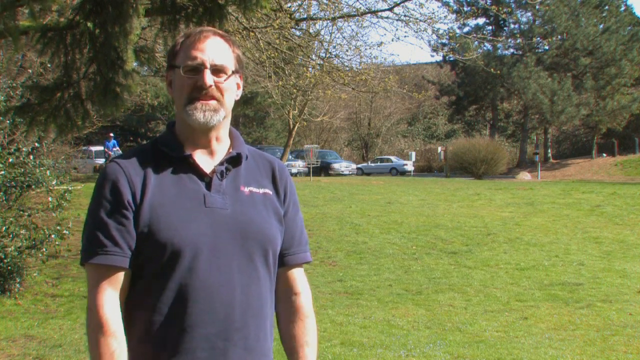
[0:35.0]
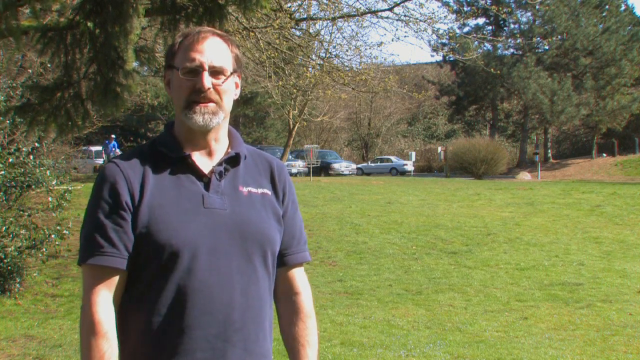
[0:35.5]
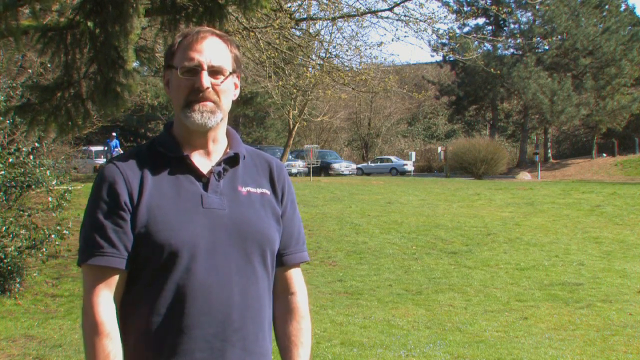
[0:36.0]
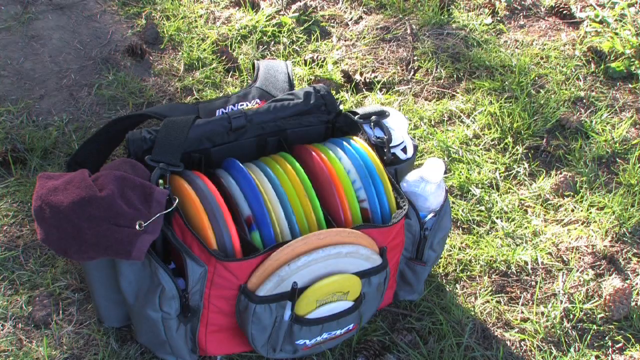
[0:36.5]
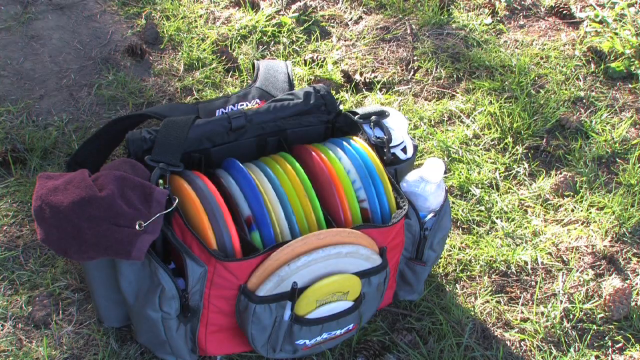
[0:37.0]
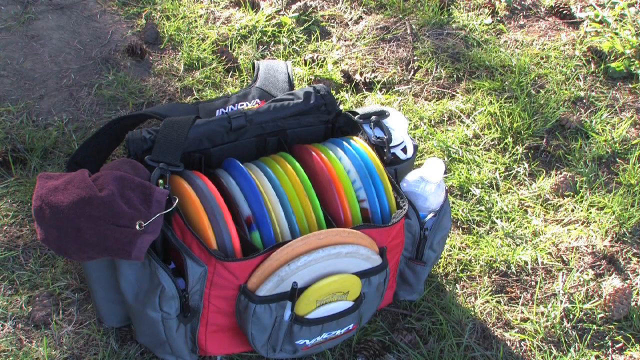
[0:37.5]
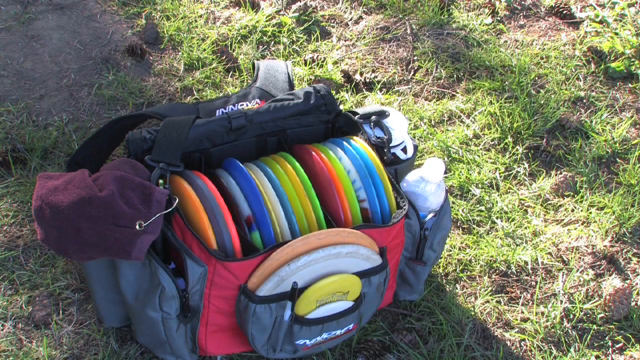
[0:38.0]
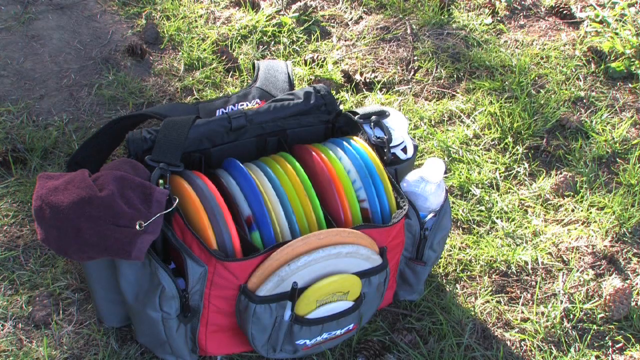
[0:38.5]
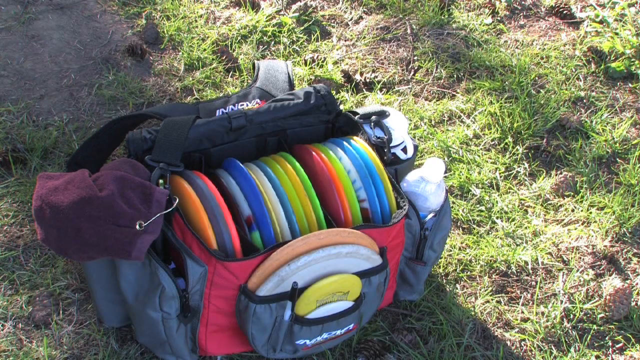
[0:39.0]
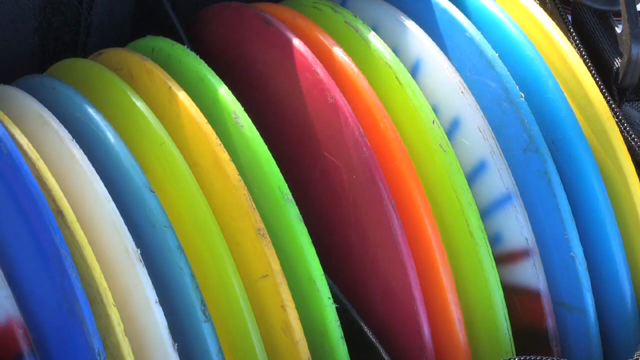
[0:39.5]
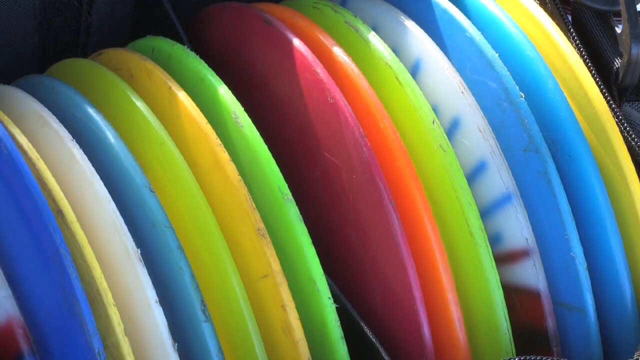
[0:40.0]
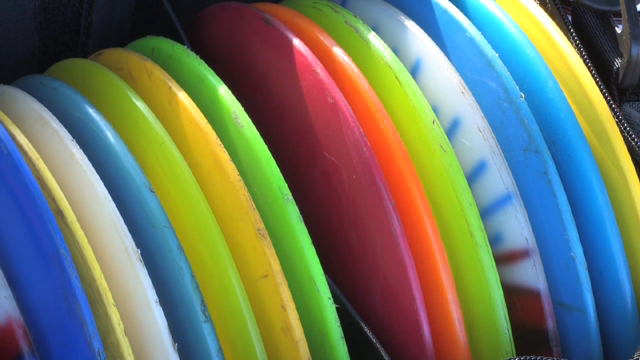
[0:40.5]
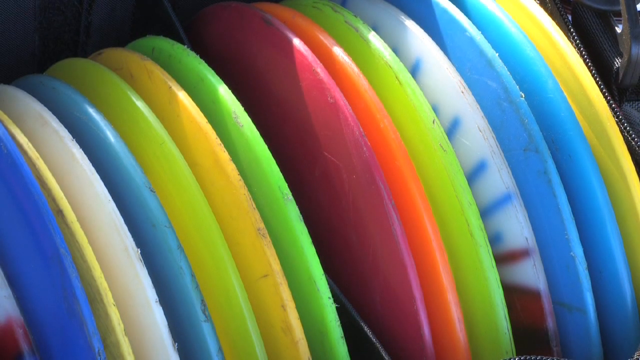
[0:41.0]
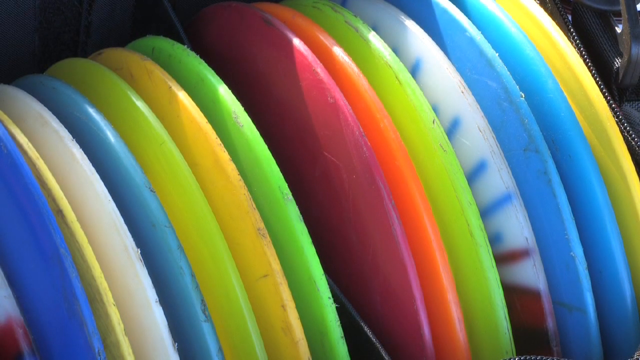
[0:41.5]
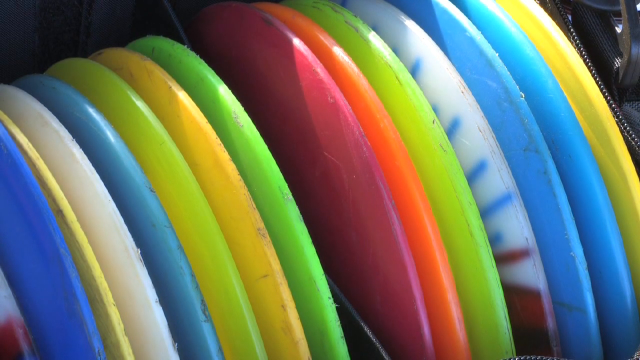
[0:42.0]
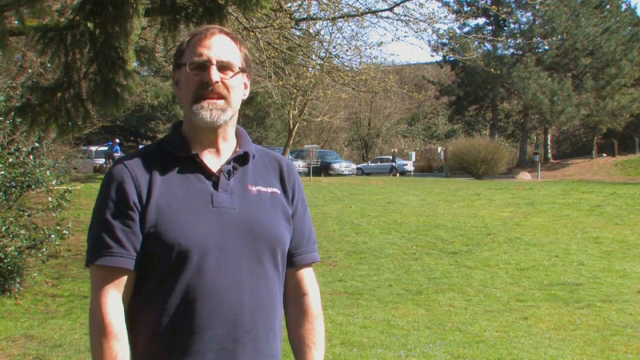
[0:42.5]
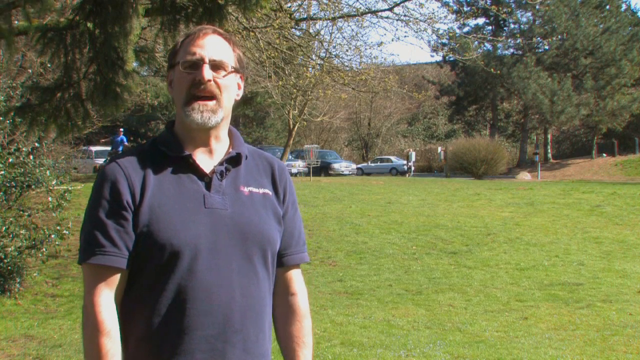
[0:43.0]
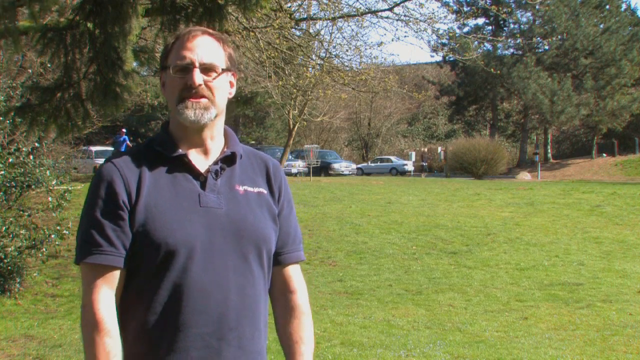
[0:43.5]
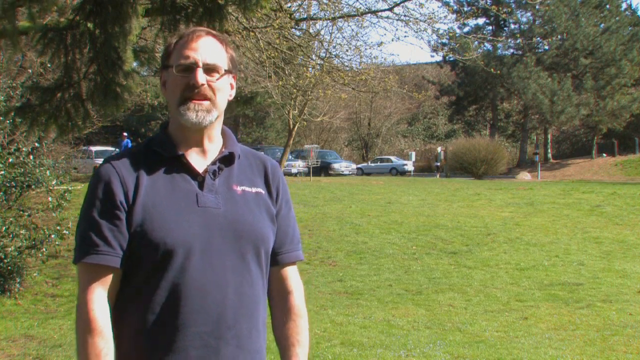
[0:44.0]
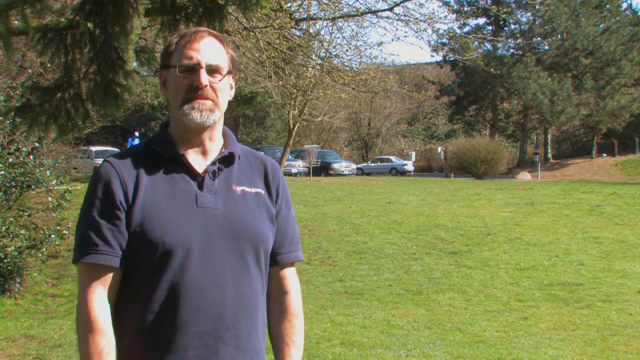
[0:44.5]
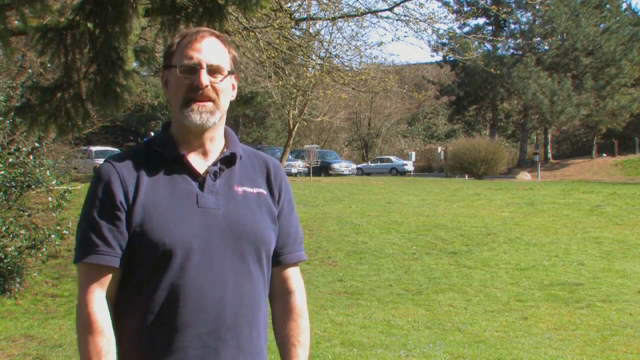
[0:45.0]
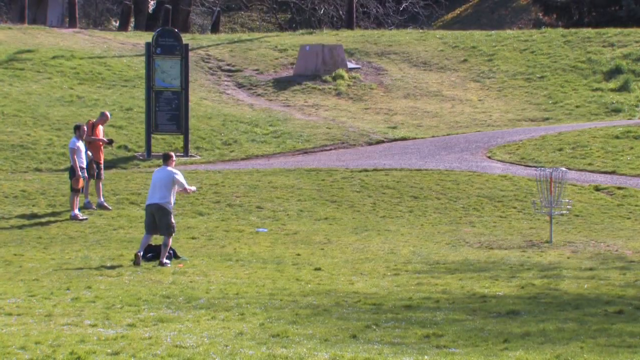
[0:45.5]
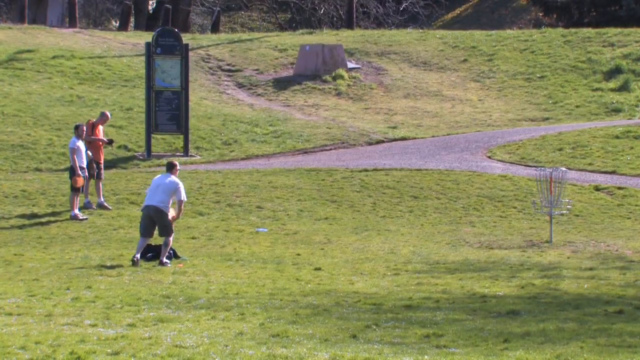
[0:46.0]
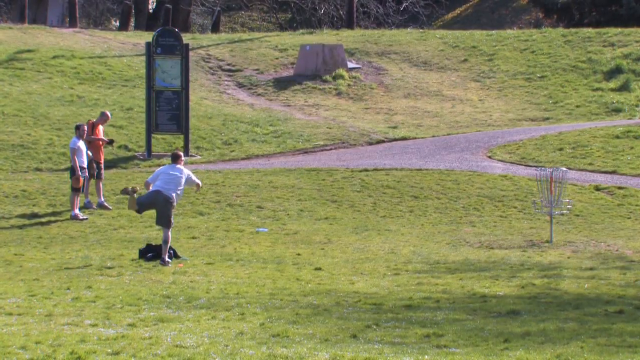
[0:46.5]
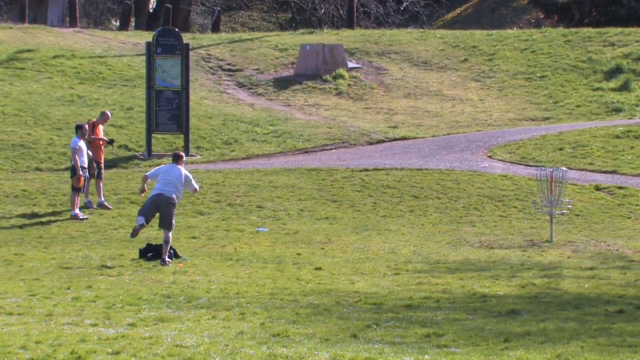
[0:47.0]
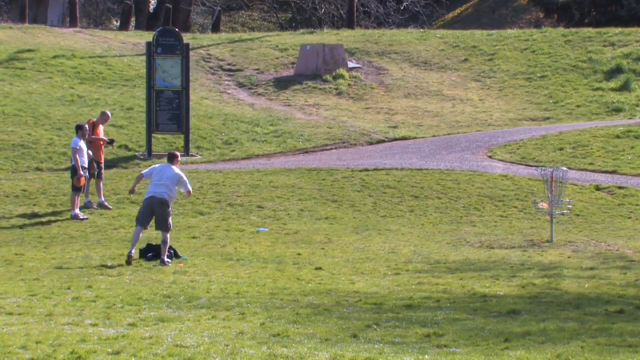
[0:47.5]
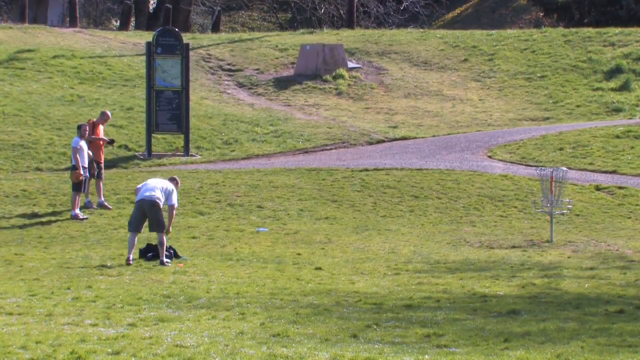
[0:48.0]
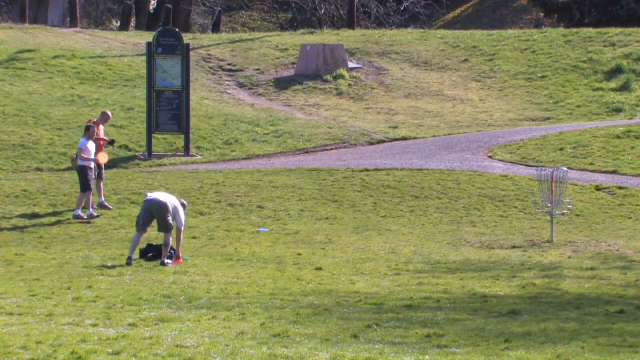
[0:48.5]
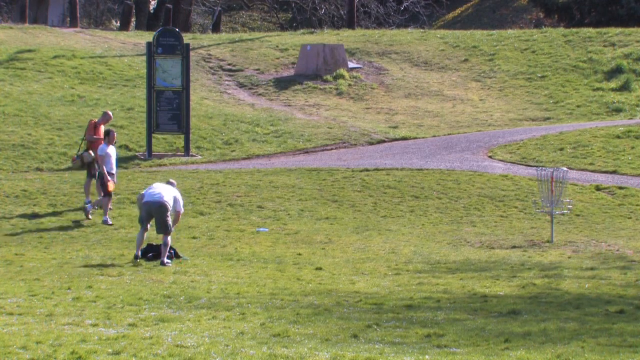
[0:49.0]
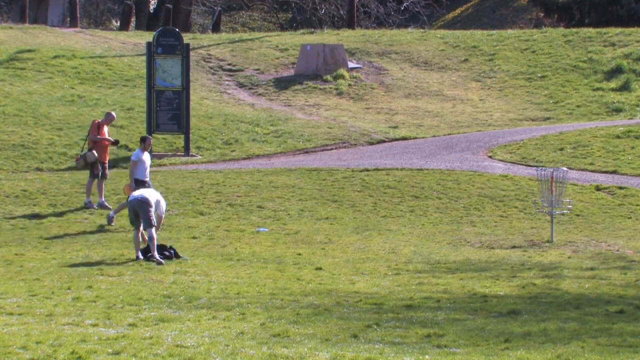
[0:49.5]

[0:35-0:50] The man continues talking to the camera. The video then shows a duffel bag on the ground that seems to be made specifically for frisbee golf. It holds multiple frisbees of different colors, both in the bag and in the front pocket, along with what seem to be articles of clothing and different water bottles. The front of the bag is red. The video zooms in on the different colored frisbees, then cuts to three people playing frisbee in the park. It again shows the different colored frisbees and the man talking about them. The people in the park seem to be taking turns back and forth in the frisbee golf game. A sign stands in the middle of the park, suggesting it is a public community park.